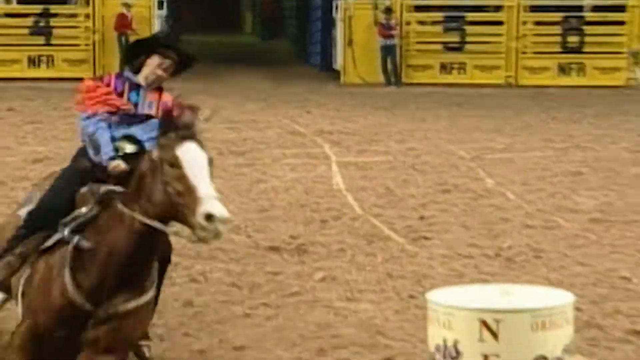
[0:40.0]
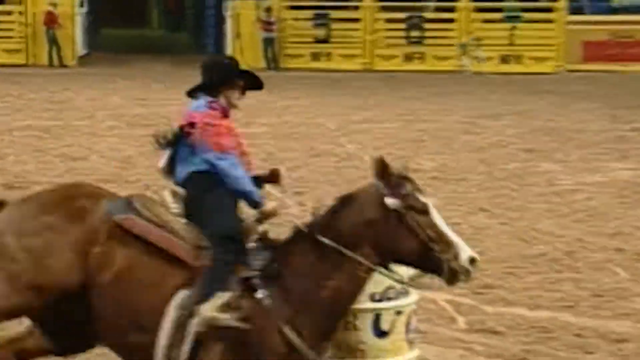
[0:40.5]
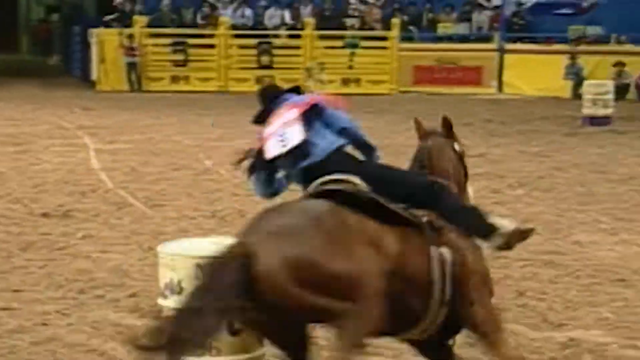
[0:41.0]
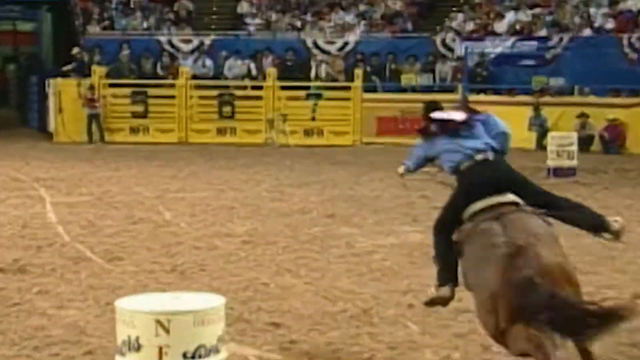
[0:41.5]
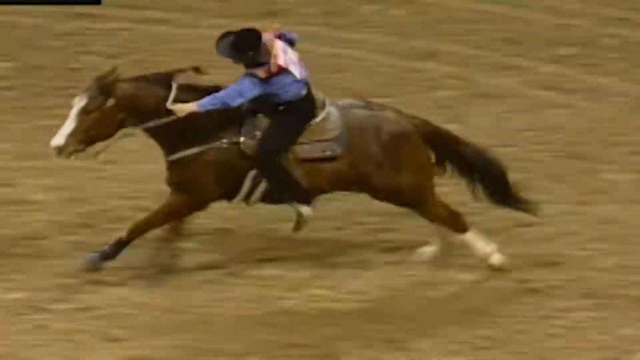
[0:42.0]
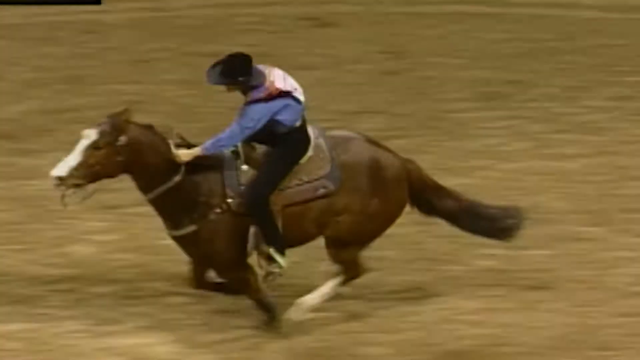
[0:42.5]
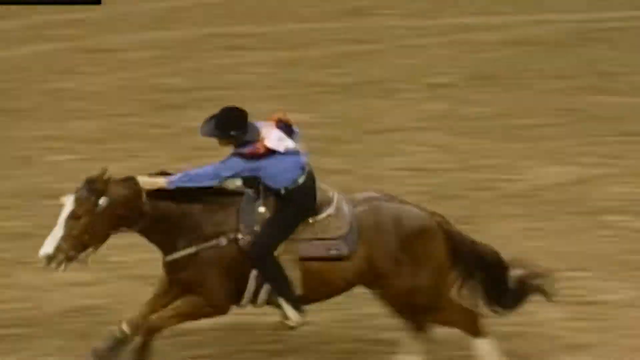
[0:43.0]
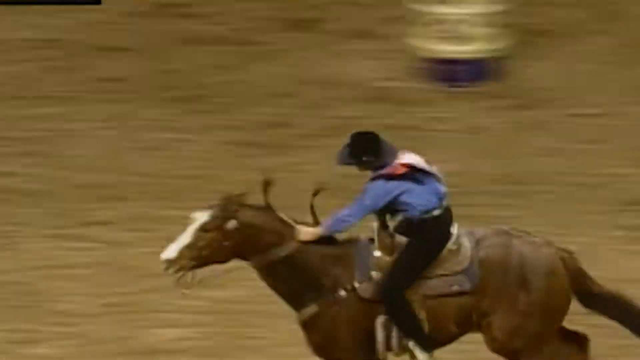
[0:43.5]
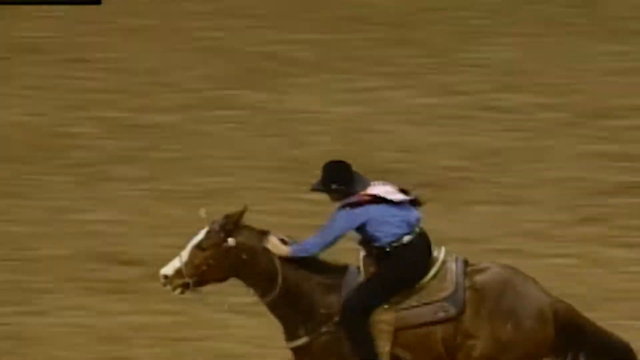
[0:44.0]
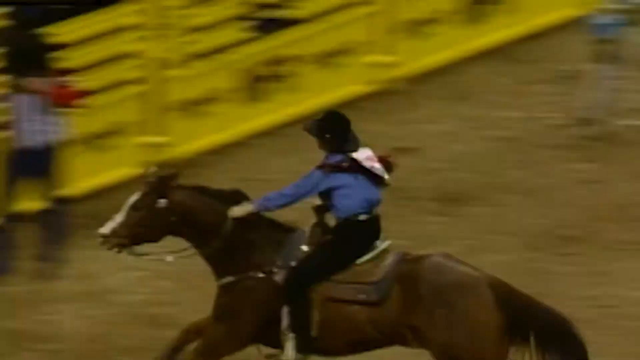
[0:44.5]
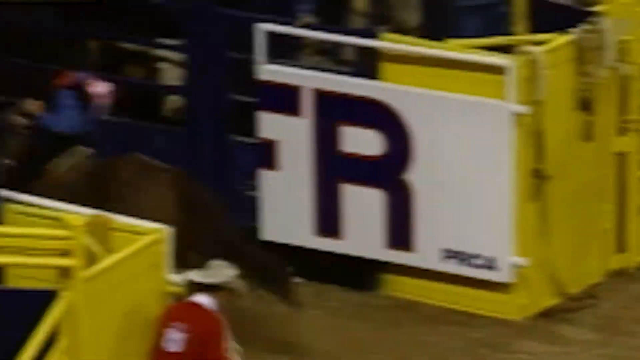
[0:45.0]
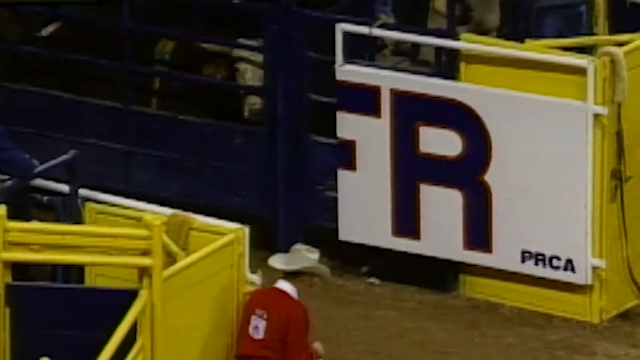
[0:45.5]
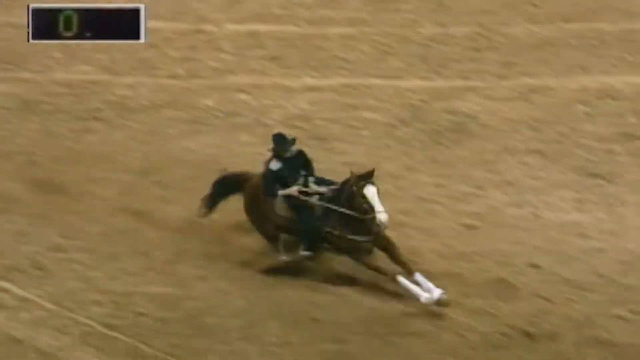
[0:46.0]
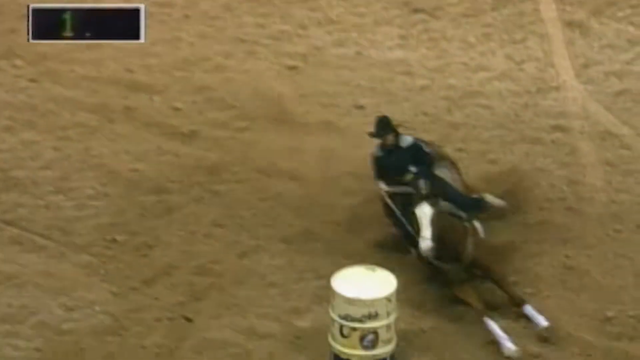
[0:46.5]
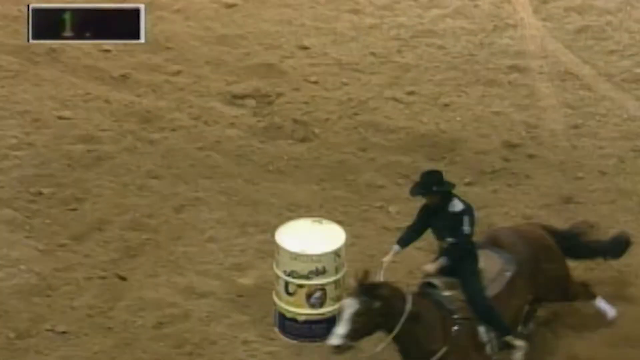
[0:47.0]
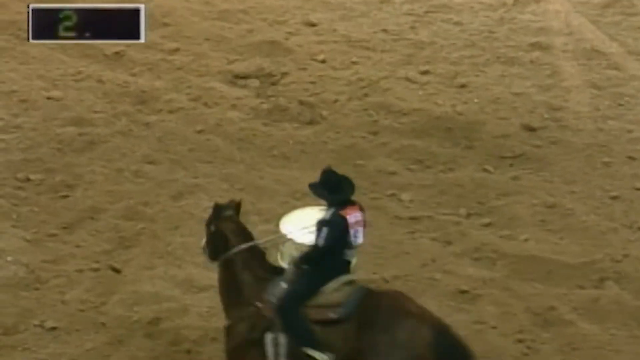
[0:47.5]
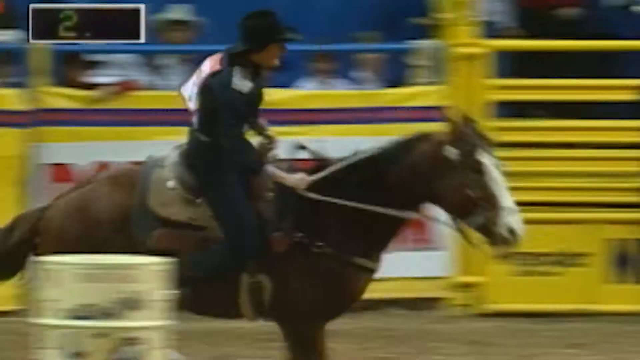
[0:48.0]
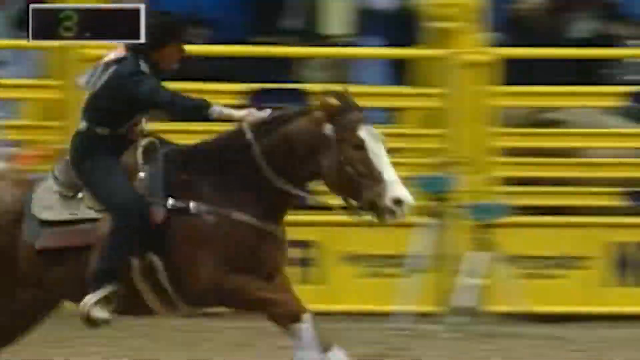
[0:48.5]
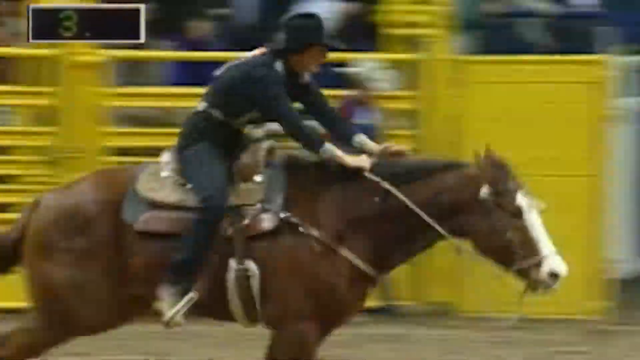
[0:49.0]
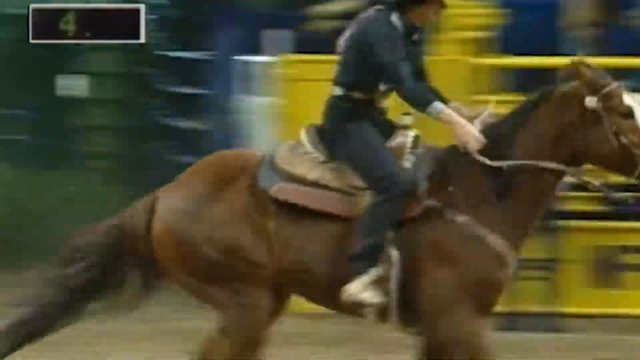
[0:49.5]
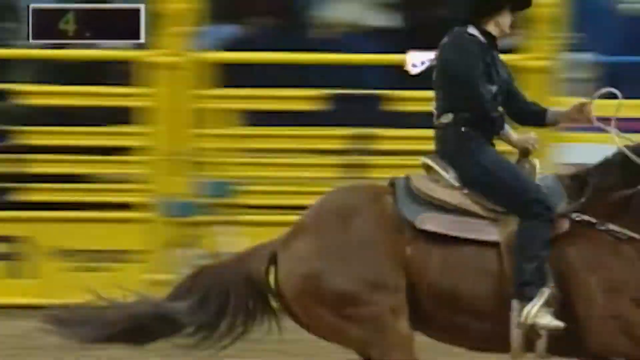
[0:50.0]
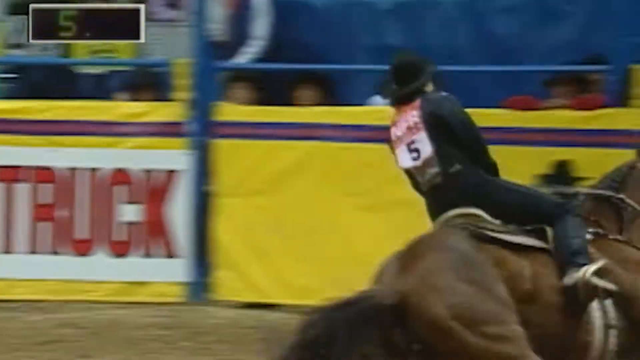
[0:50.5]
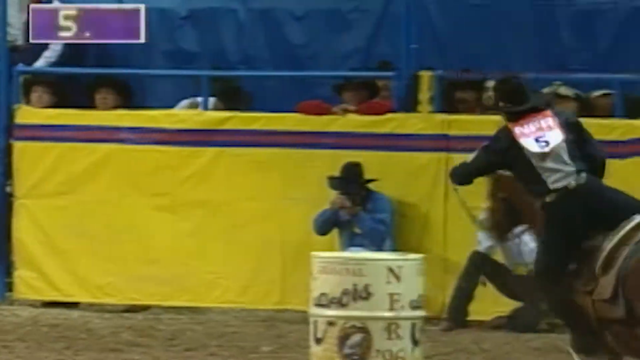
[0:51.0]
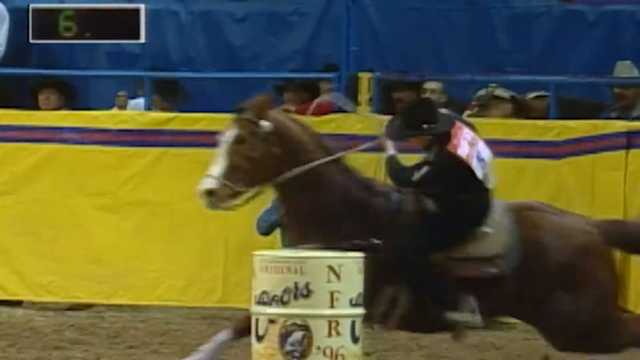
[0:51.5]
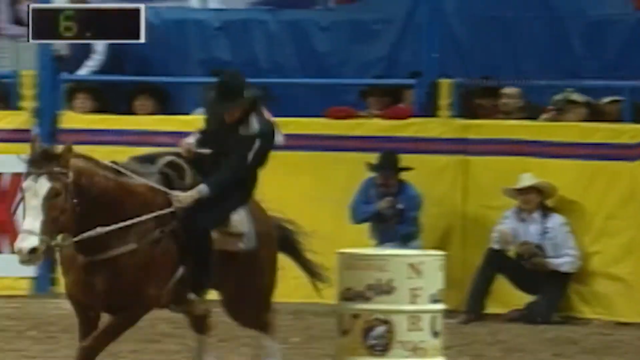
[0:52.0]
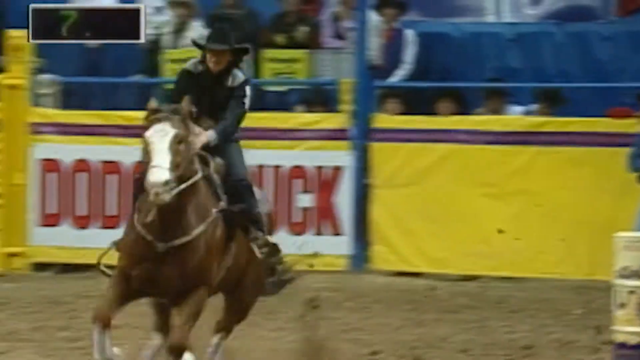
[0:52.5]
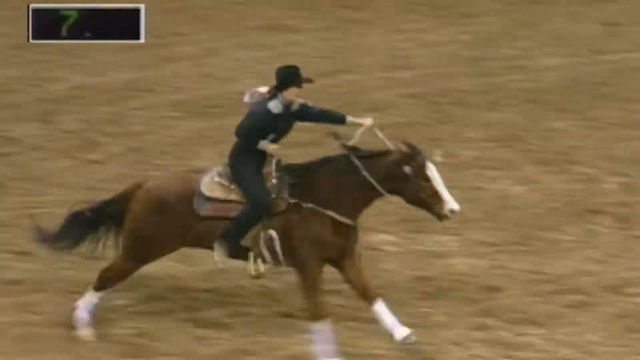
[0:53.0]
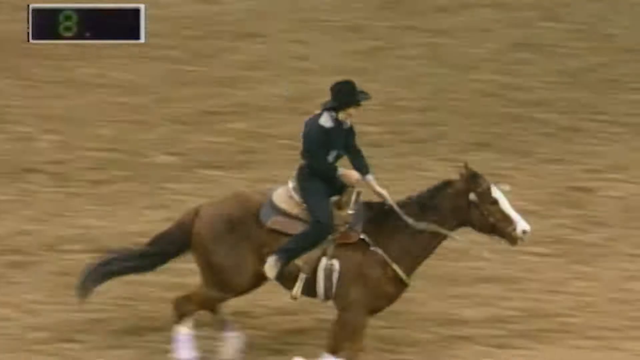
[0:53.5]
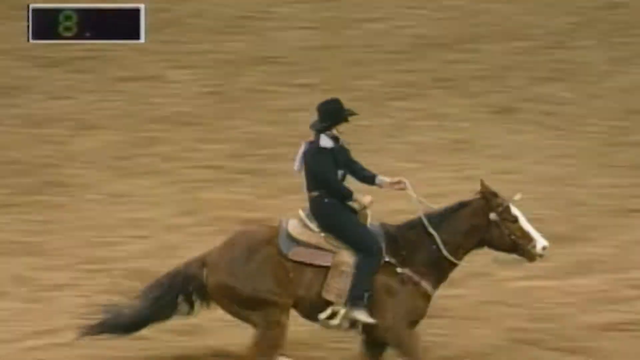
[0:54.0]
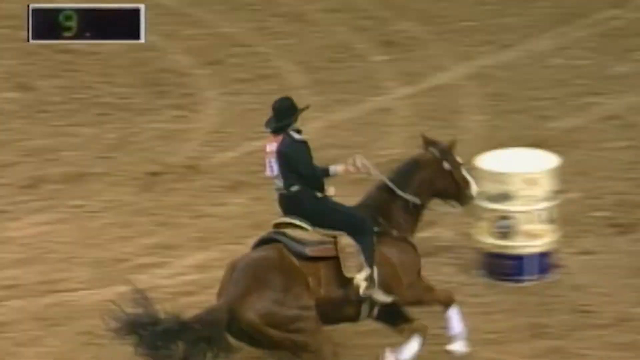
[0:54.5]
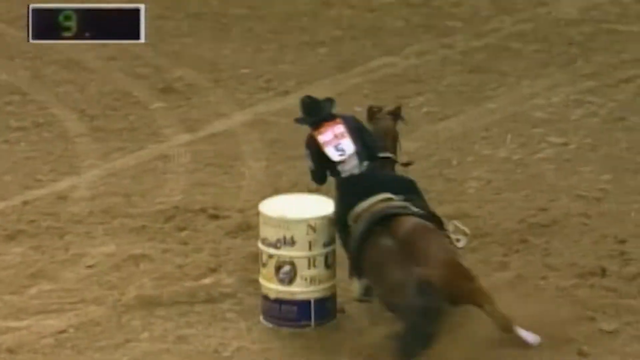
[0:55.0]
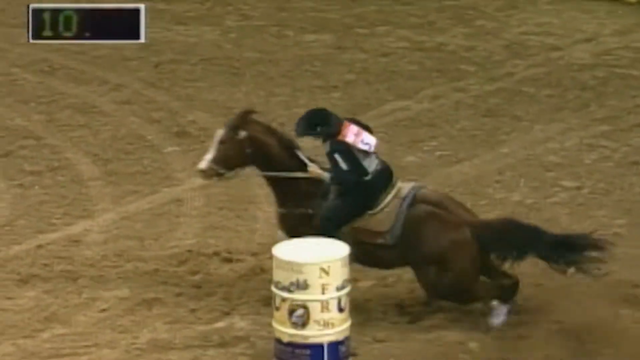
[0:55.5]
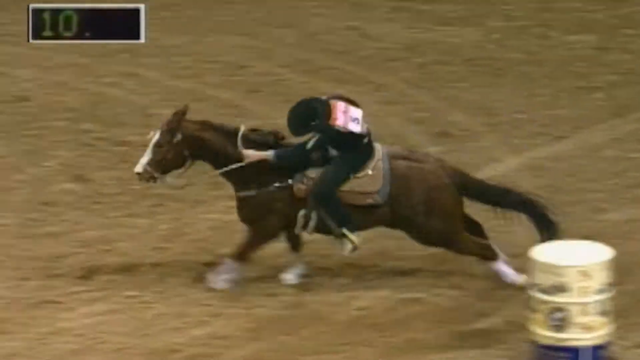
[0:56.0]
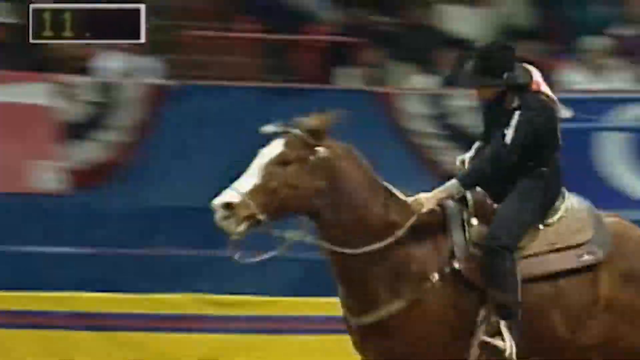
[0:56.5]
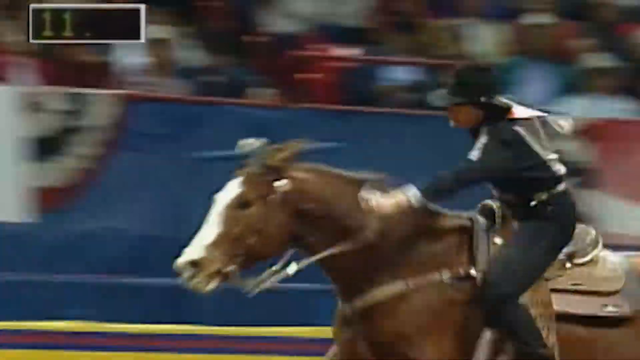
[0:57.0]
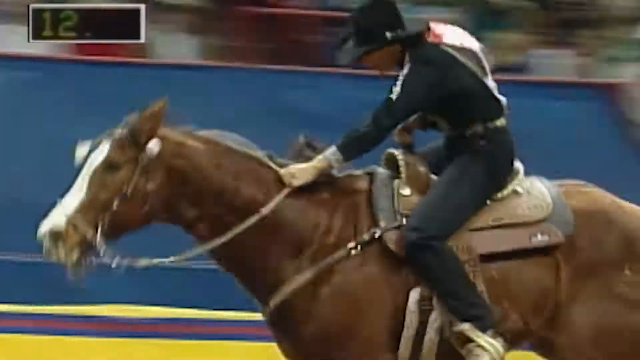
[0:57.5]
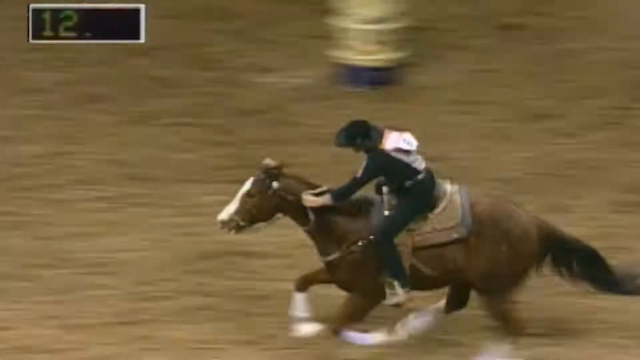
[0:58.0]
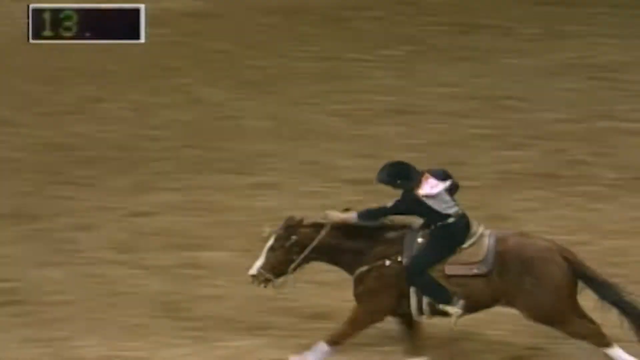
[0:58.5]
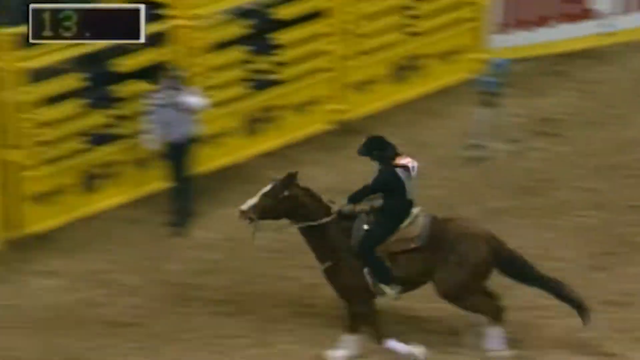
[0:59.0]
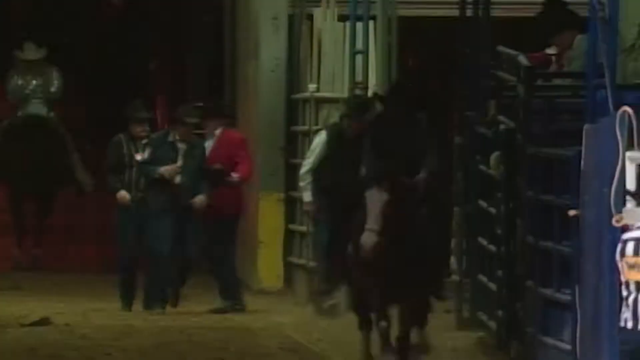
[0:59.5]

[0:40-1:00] A horse comes toward the camera with the woman in the blue shirt, black hat and black pants still riding it. The horse goes around a barrel and runs straight forward. The camera angle changes to show the left side of the horse as it runs to the left side of the screen. The woman holds a rope attached to the horse's face with her left hand and the front of the saddle with her right hand as the horse gallops, and she rides through the gate. The shot changes to another derby or rodeo, where the horse looks like the same horse based on the design on its face, and the woman is dressed all in black with a slight white patch on her left and right shoulders. The number on her back is 5. A clock in the top left corner of the screen shows the time it takes the horse and the woman to finish the obstacle. As before, the horse runs from the left side of the barrel all the way around and then runs forward. The camera angle changes to show the right side of the horse; the woman holds the rope connected to the horse's face with her right hand and has her left hand on the saddle. Right as she approaches the second barrel from the right side, she switches hands, grabbing the rope with her left hand and the saddle with her right. The horse goes all the way around the barrel from the right side, comes straight across the field, and goes all the way around another barrel from the right side. As she runs toward the gate, the clock at the top left reads 13 seconds.